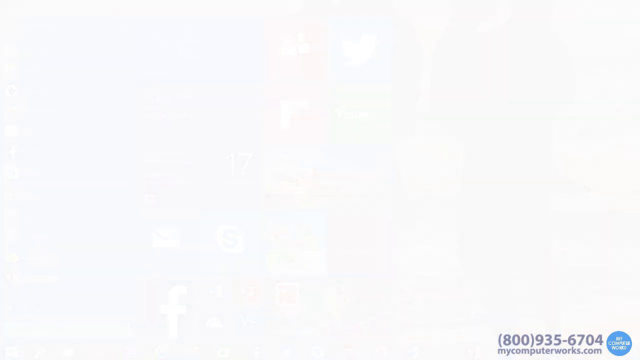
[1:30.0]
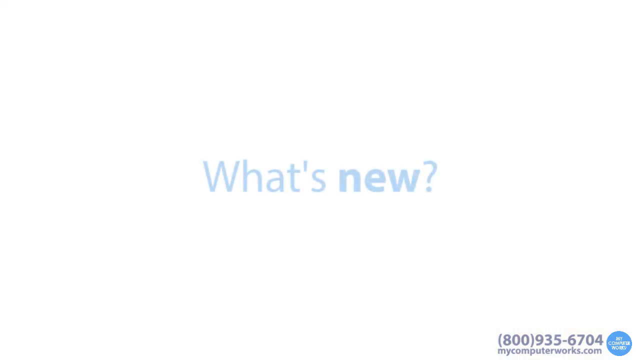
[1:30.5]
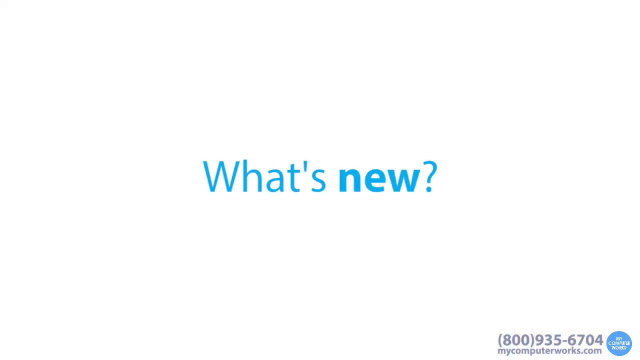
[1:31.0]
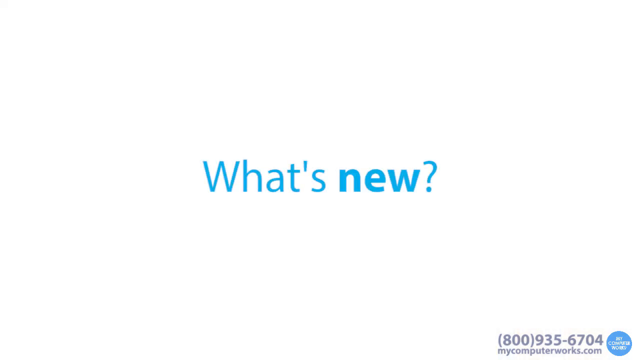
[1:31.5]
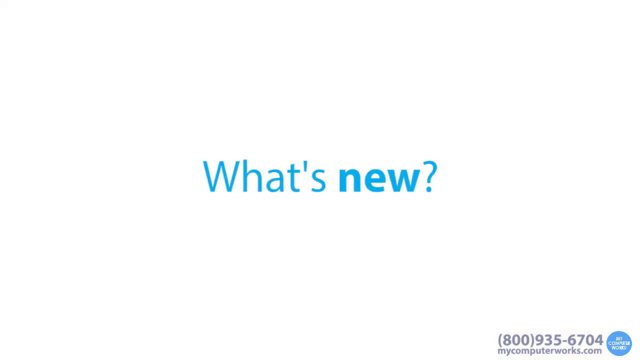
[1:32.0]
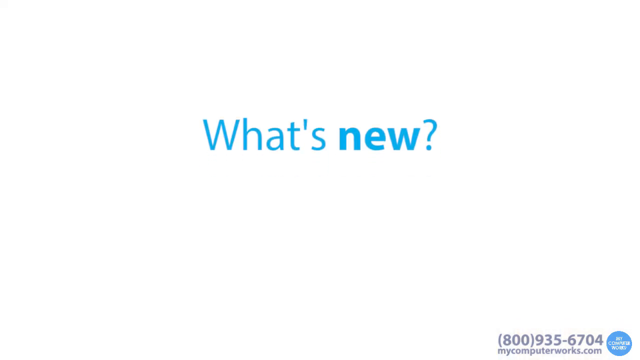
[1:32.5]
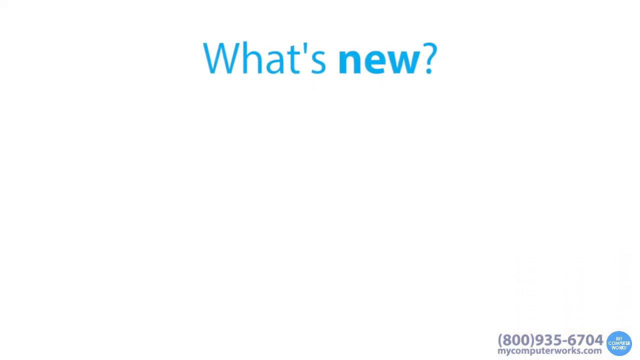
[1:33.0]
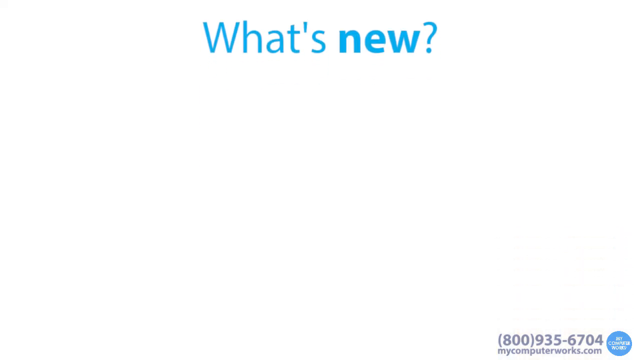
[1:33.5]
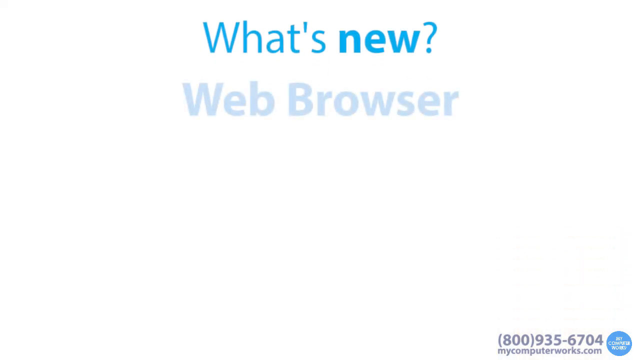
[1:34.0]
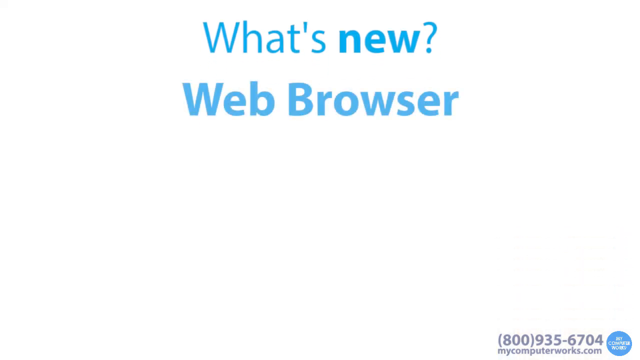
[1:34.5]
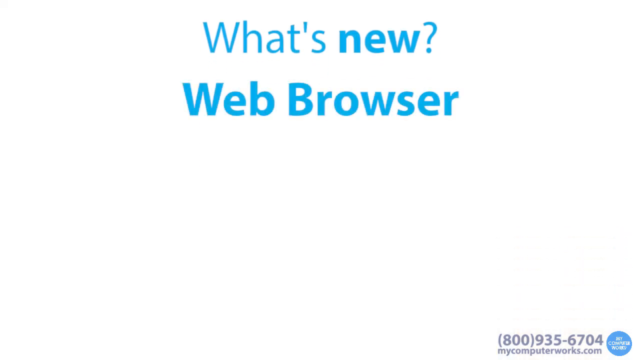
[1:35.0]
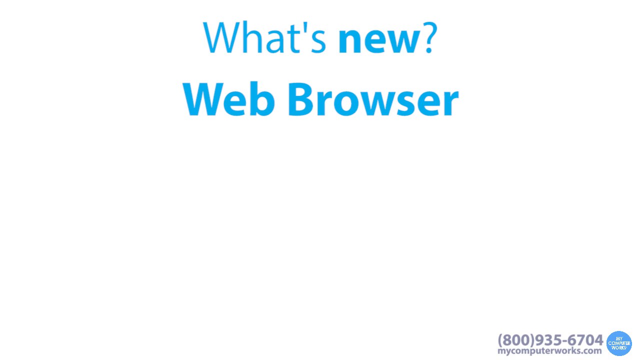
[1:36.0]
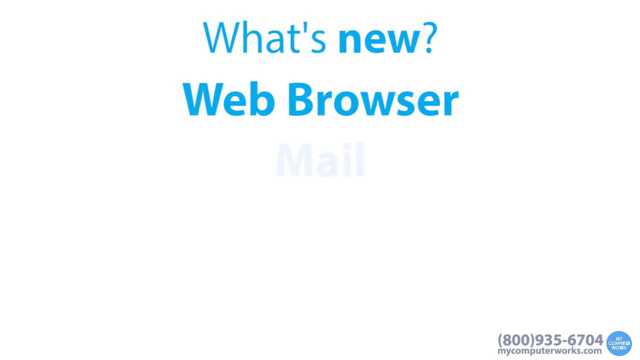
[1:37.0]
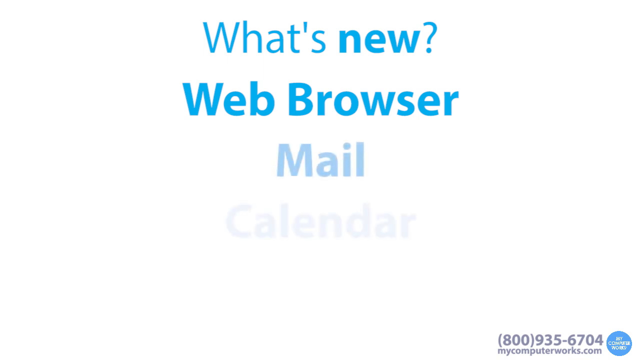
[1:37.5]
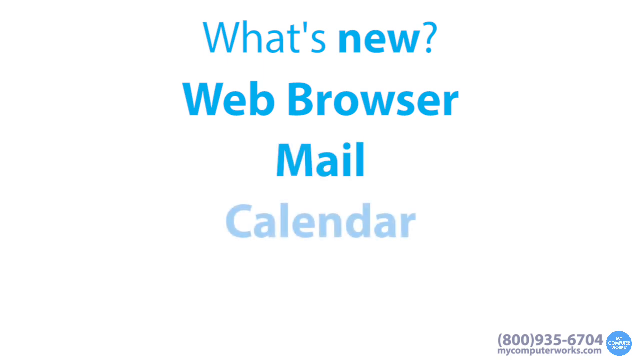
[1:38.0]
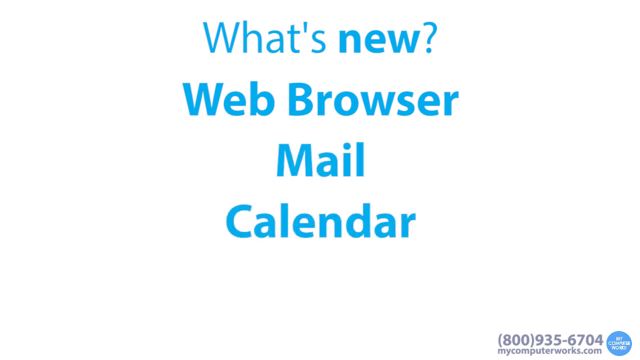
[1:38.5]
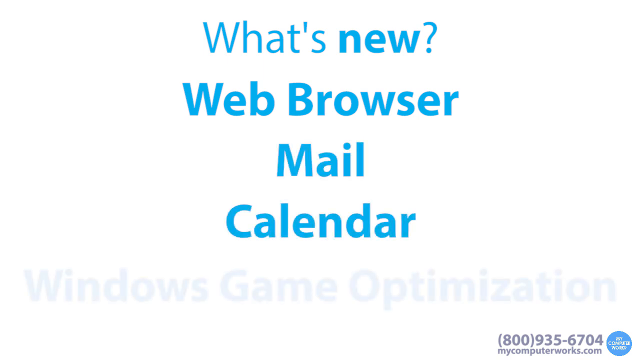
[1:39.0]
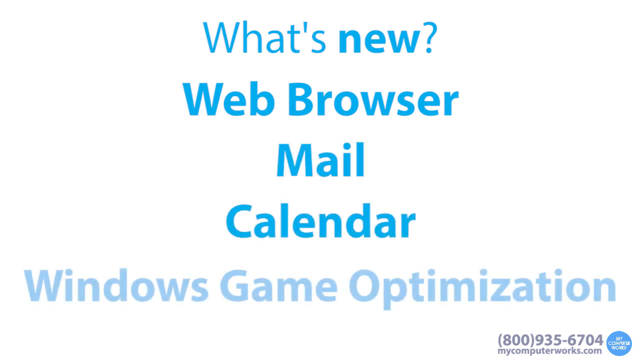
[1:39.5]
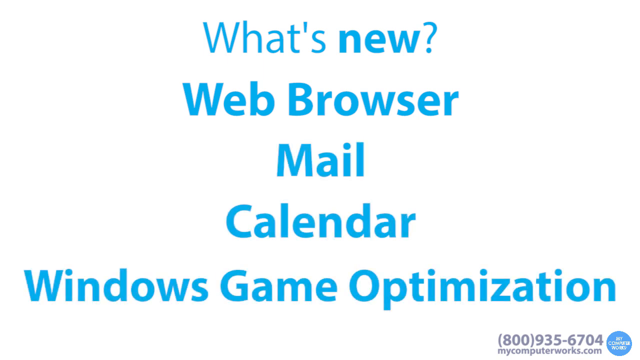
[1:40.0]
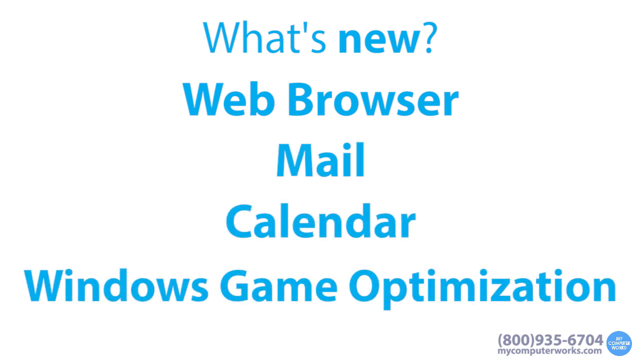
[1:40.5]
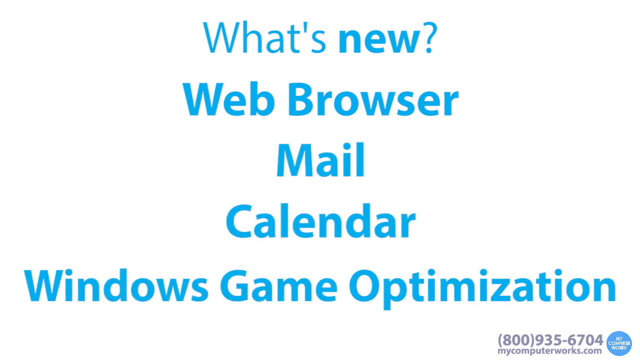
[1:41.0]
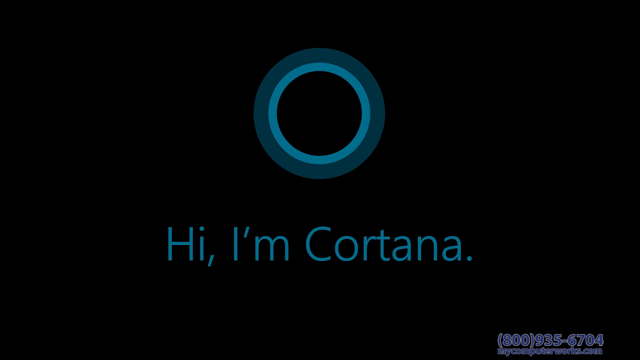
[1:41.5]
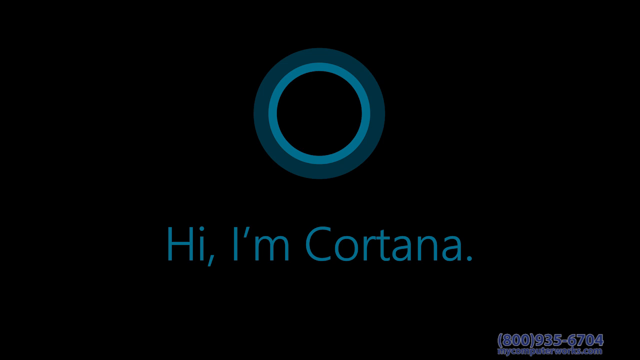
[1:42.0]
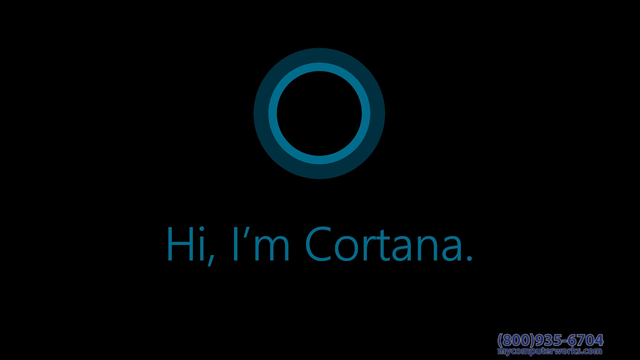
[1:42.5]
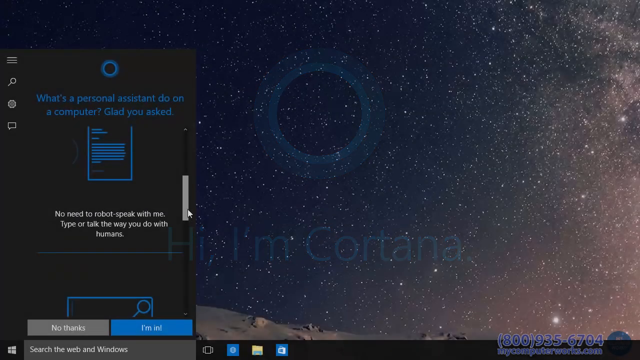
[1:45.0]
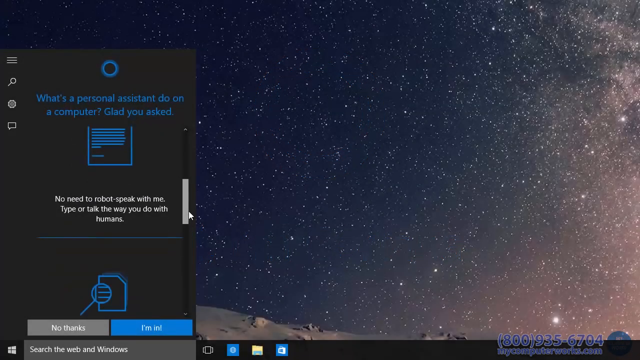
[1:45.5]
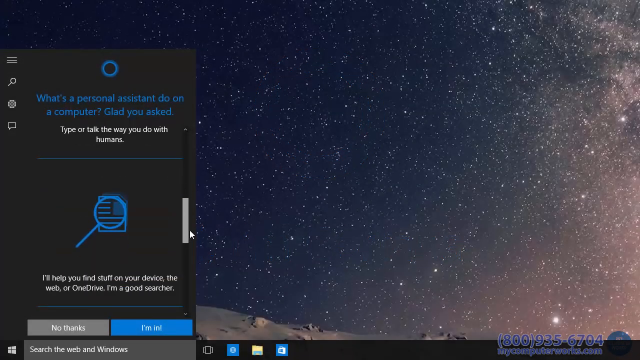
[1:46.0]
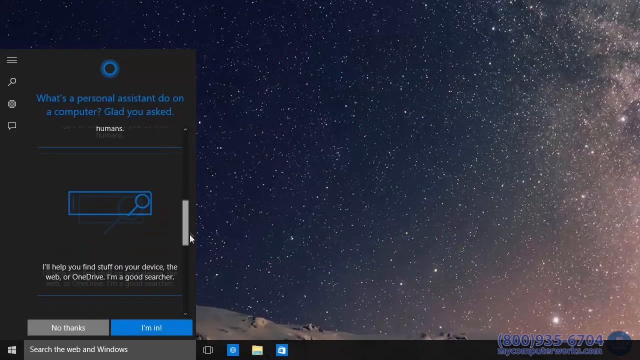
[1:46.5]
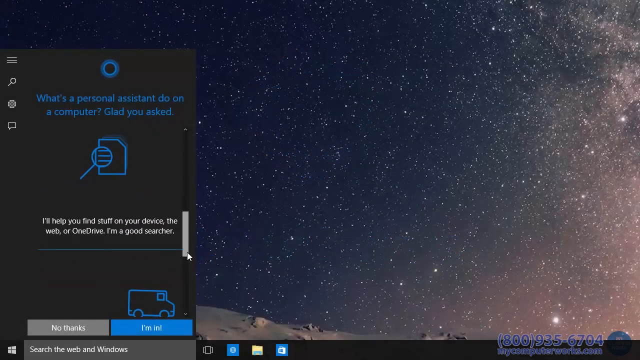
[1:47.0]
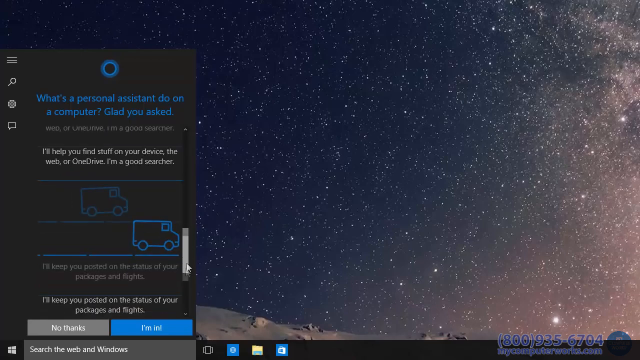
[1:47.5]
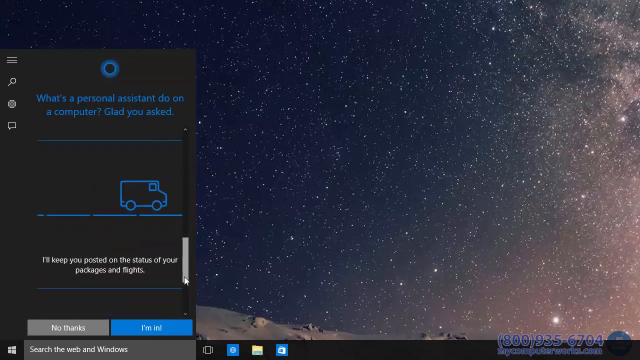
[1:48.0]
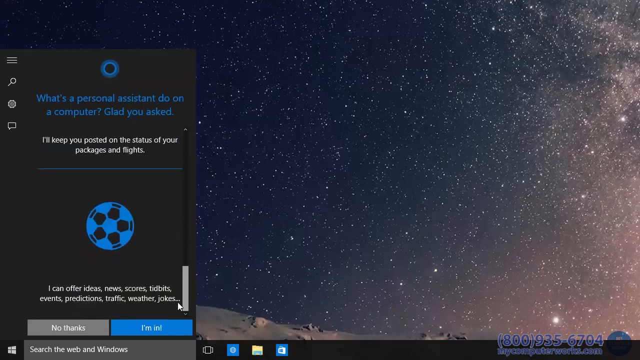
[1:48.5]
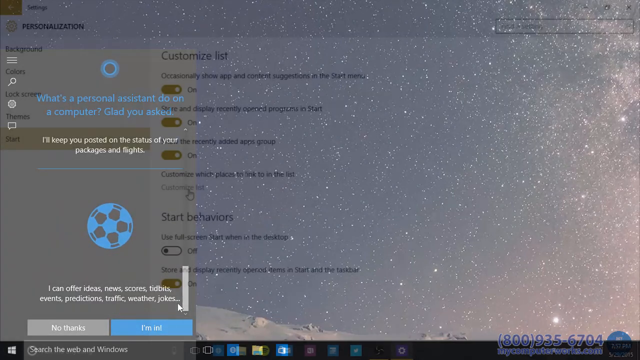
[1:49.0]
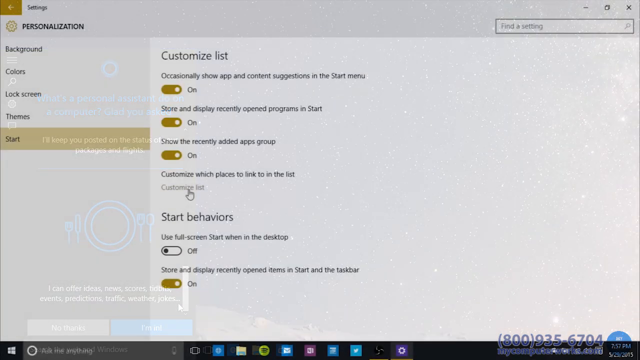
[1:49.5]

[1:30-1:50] A white screen shades to black through a gradation at the very bottom. Blue text fades into the middle of the screen: "What's new?", with "new" in bold. The text moves up to the top of the screen and underneath it "Web browser" fades in in blue, followed by more lines appearing below: first "mail", then "calendar", and after that "Windows game optimisation". The shot cuts to a black screen with a light blue ring in the centre top and a thicker, darker blue ring outside it, with the blue words "Hi, I'm Cortana" underneath. This fades to another desktop with a starfield backdrop, whiter light on the right moving to dark blue on the left. Open in the bottom left-hand corner is a black vertical rectangle with four white control options arranged vertically at the top left and a slider control to the right. The top section has the ring logo and underneath it in blue, "What's a personal assistant do on a computer? Glad you asked", and below that in white, "No need to robot speak with me. Type or talk the way you do with humans". The vertical scroller pulls down to another section; all the sections have blue line-drawing animations, including a magnifying glass and a moving van. A cross dissolve leads to another computer display, predominantly white, with a grey vertical options bar down the left topped by "Personalisation" in black. In the large right-hand segment is a list of options under the title "Customised list", with on/off toggles next to them.